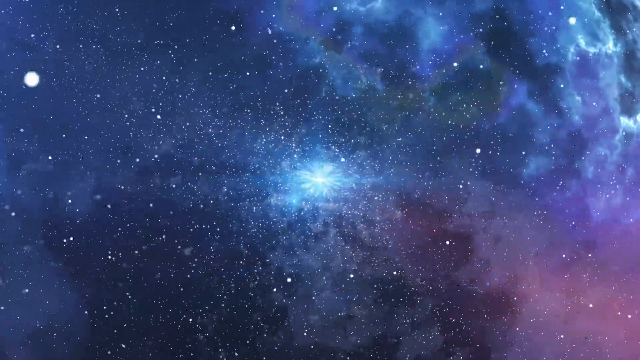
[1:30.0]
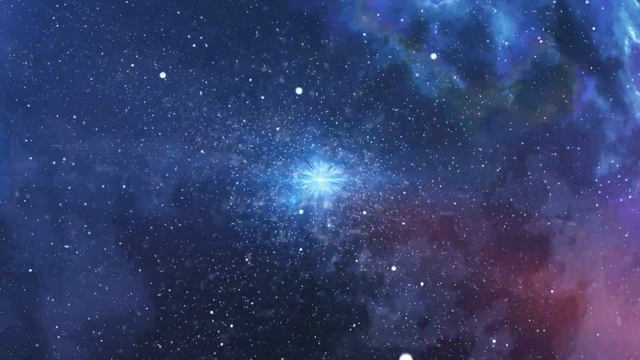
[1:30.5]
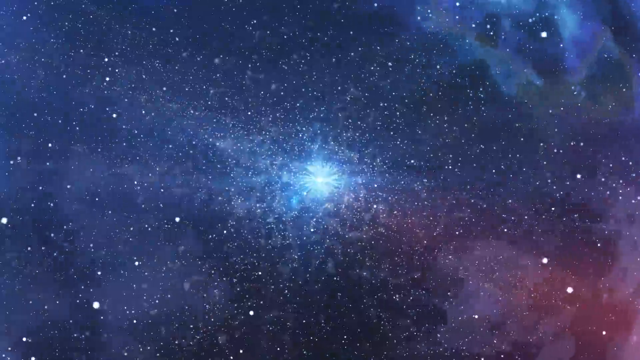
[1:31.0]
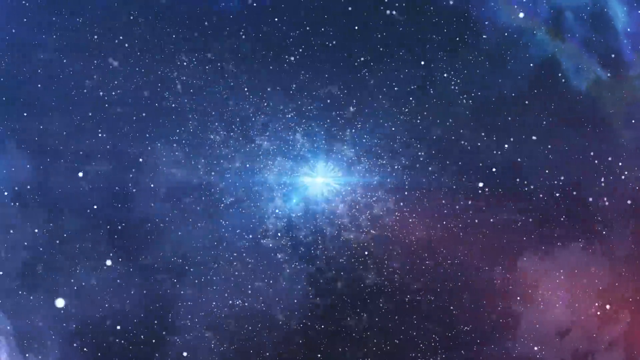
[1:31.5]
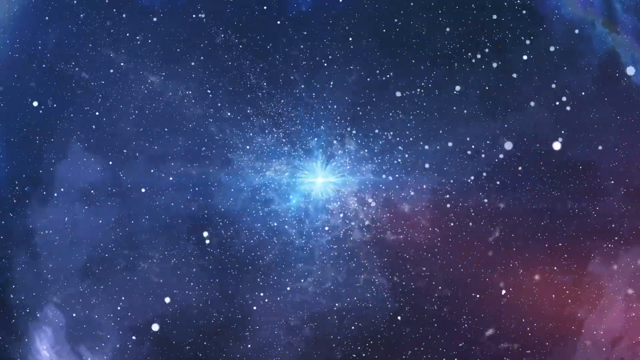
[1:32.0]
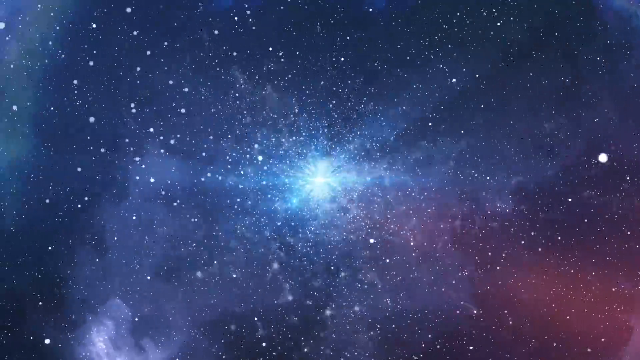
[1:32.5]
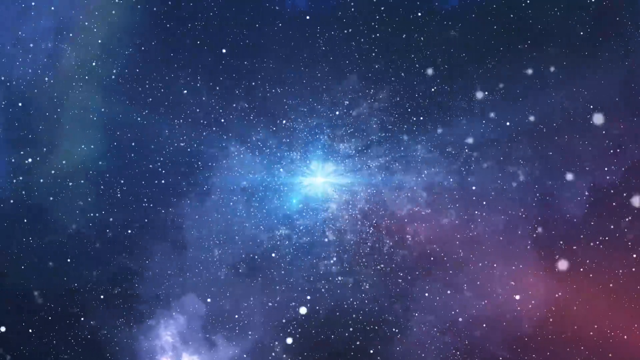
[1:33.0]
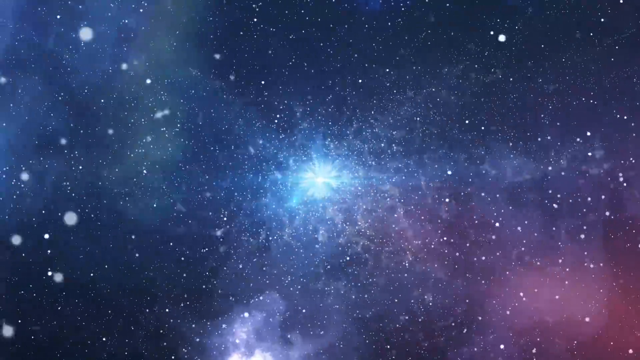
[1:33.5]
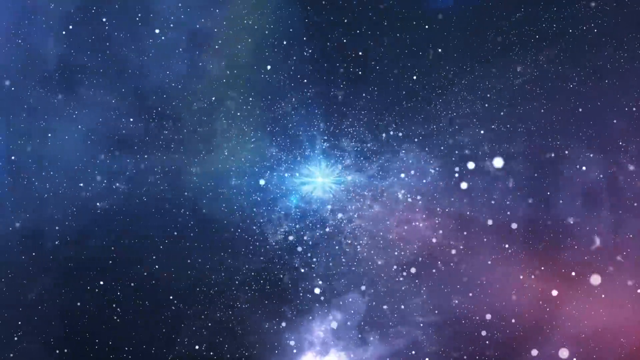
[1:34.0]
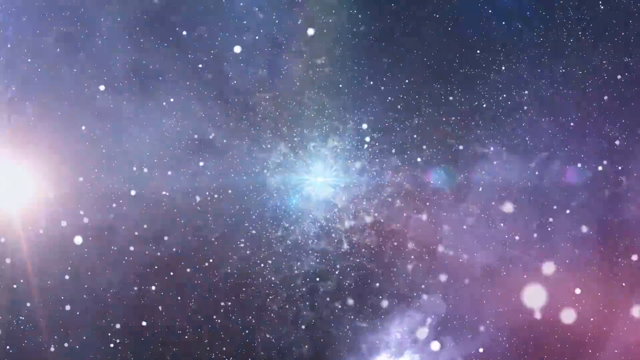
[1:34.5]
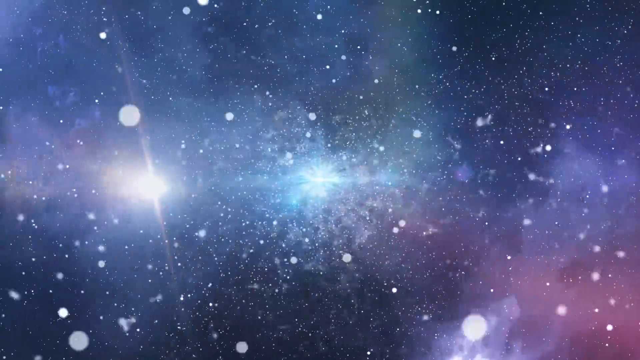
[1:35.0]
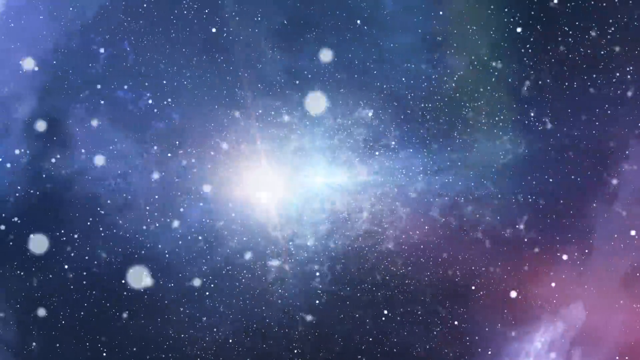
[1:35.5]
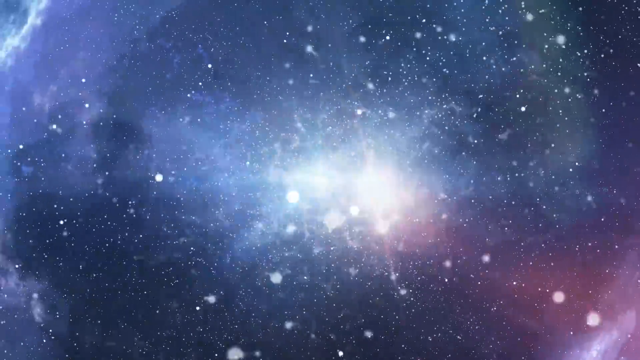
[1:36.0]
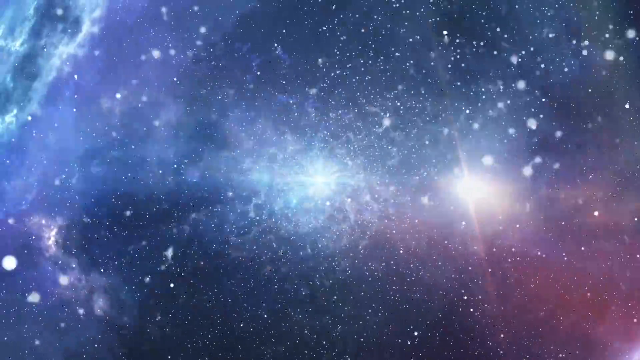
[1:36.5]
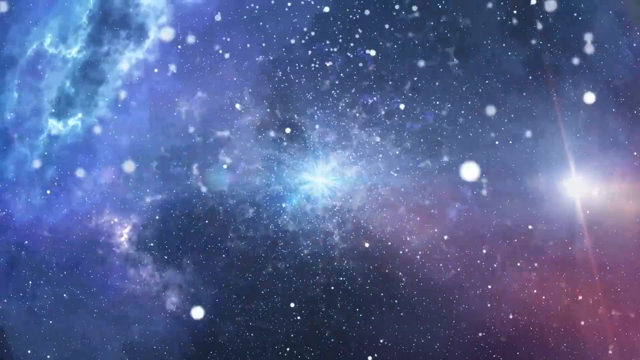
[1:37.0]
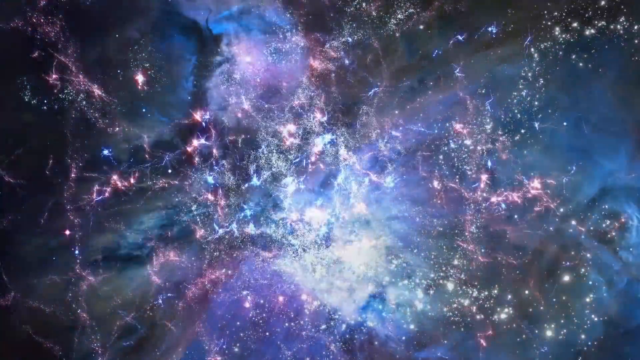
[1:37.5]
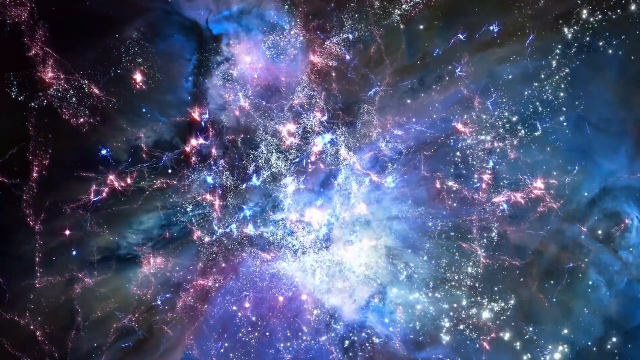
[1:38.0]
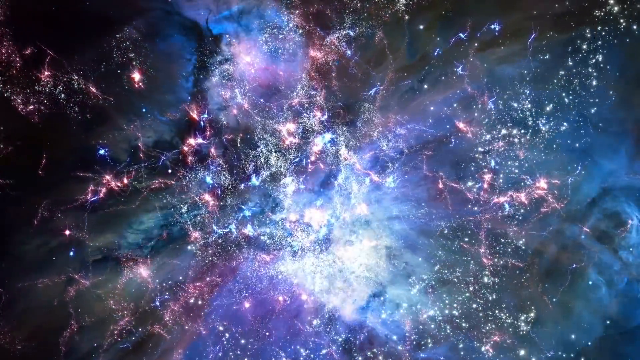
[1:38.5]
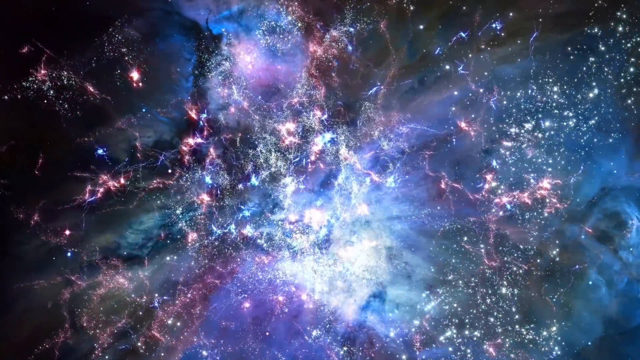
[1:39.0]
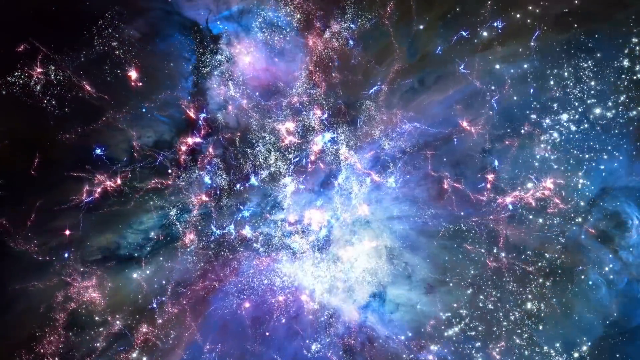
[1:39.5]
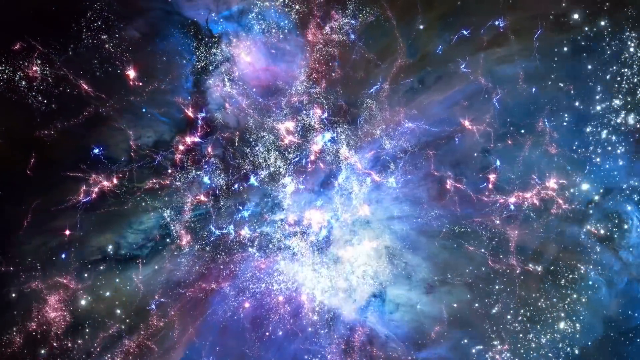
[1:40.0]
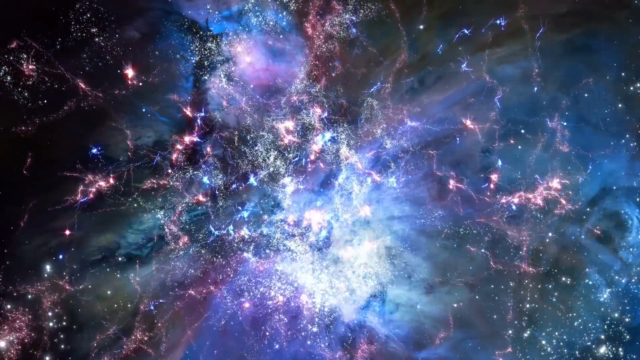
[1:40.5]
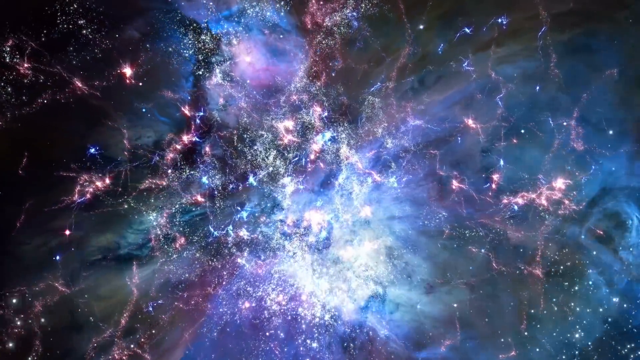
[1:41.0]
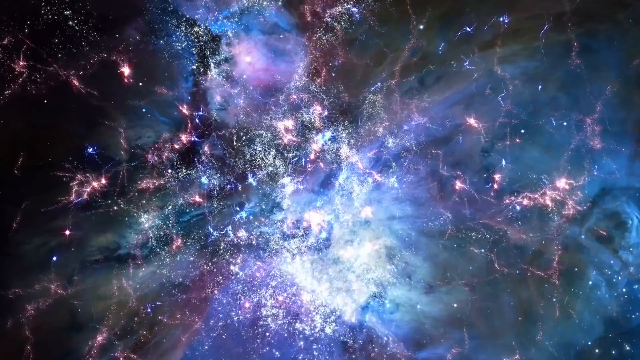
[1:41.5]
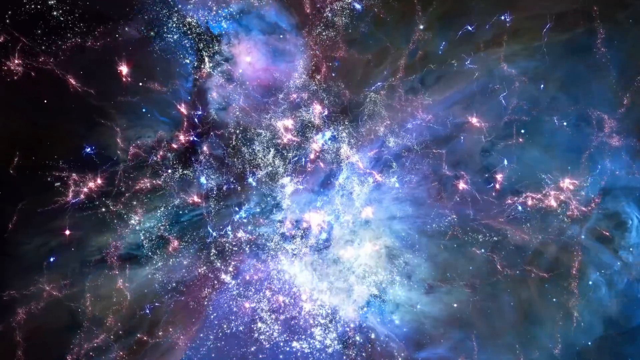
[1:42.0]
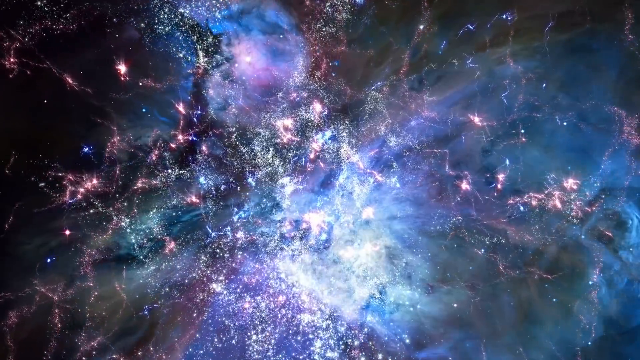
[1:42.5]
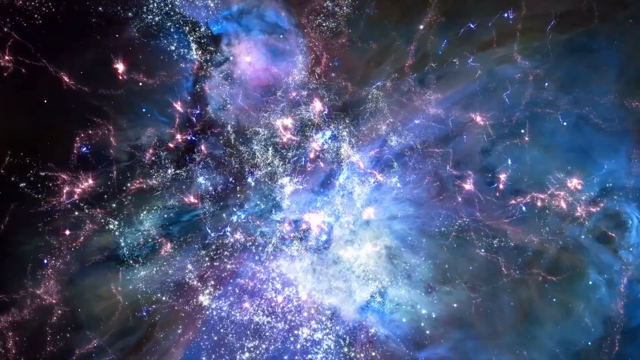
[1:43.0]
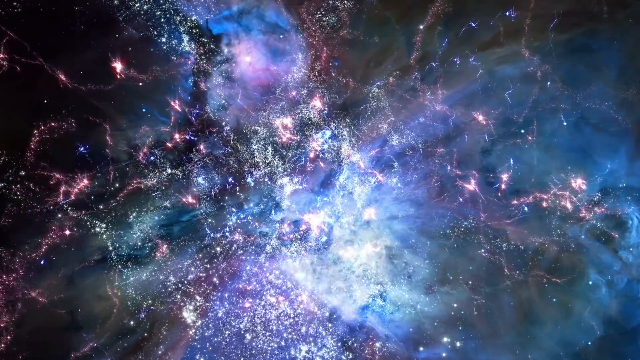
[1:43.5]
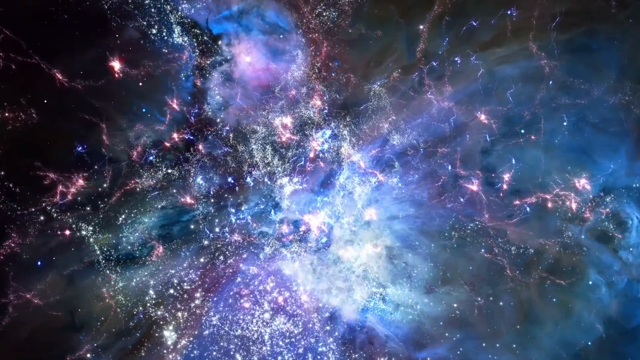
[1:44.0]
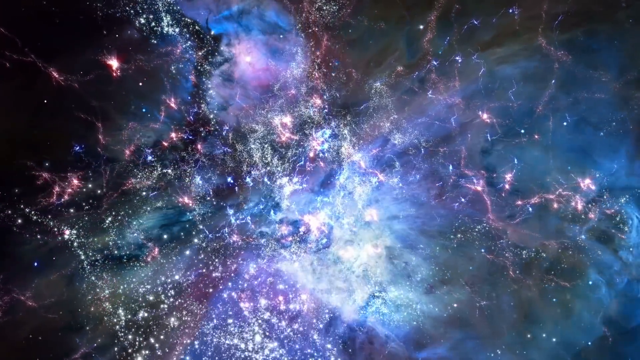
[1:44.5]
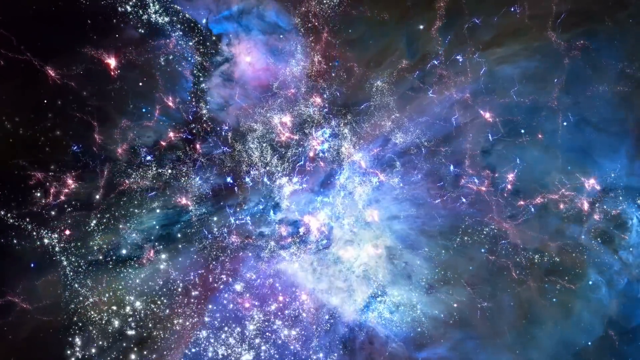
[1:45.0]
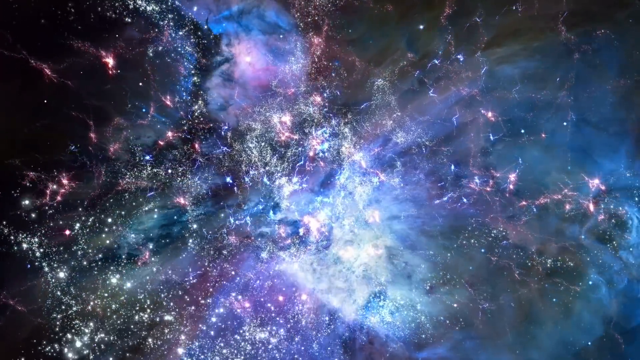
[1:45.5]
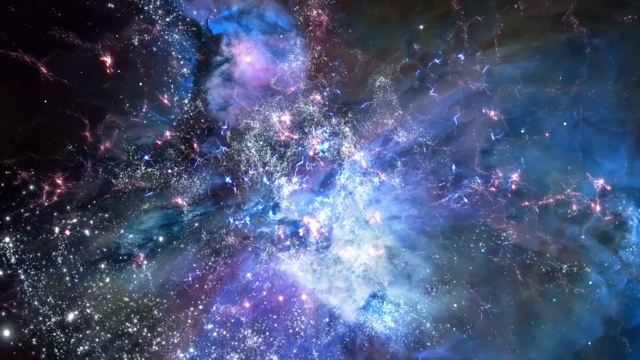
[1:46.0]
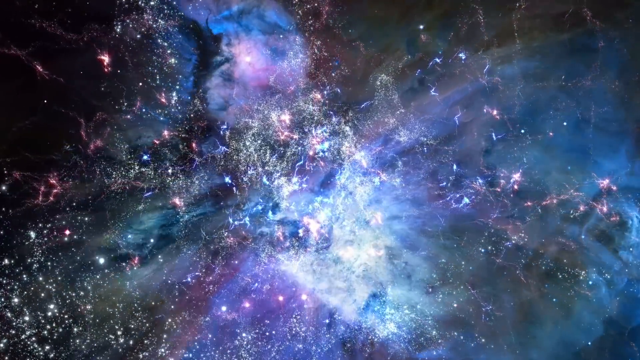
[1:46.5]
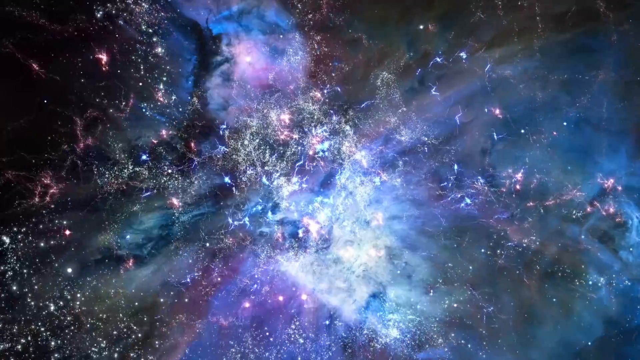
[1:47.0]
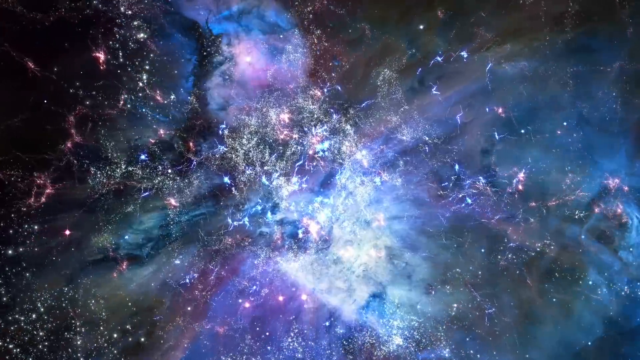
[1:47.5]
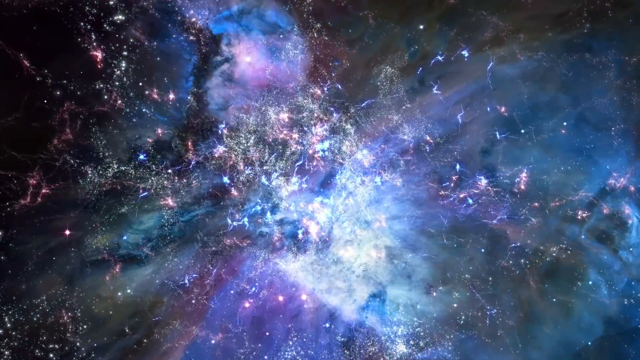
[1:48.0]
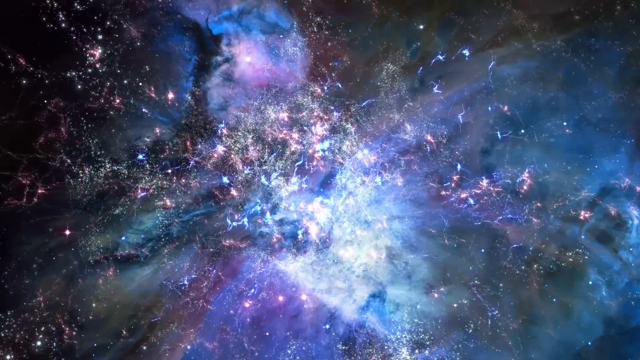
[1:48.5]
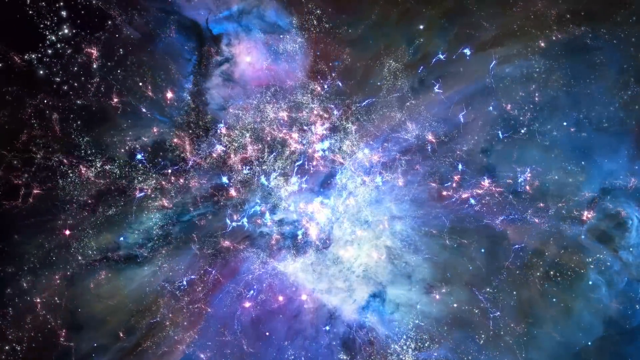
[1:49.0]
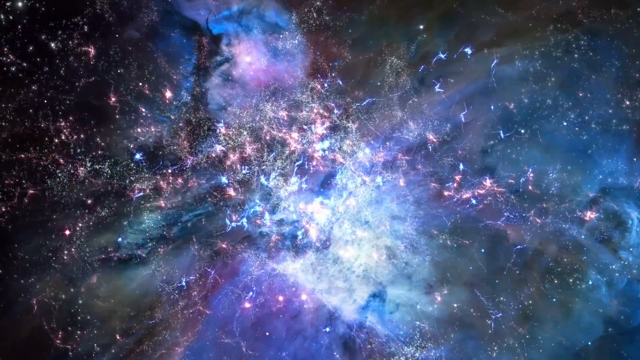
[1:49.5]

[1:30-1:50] Many little dots, apparently stars, are visible. The sky is no longer all black: it is a dark deep blue mixed with black, with a little magenta, and some spots of black remain. The camera seems to spin around the explosion and then go through it. There is a lot of magenta, possibly debris or light, along with deep blue and different shades of light, almost like sparks going past the camera.